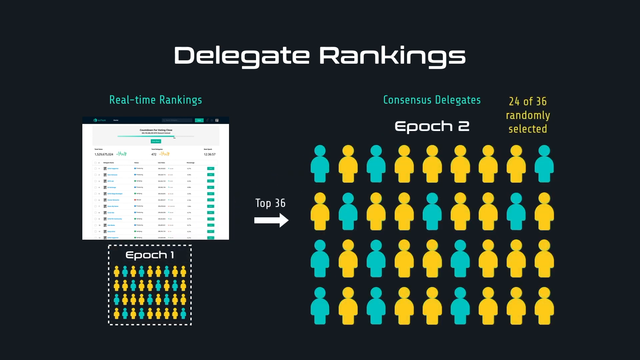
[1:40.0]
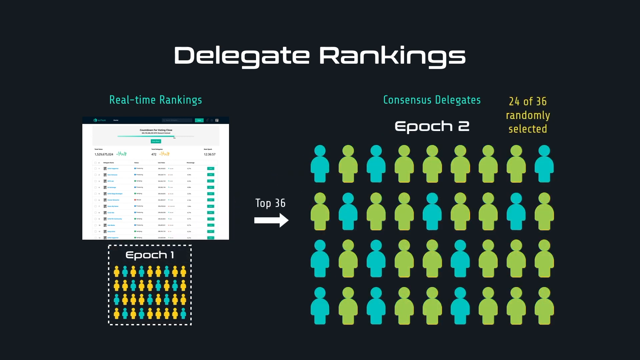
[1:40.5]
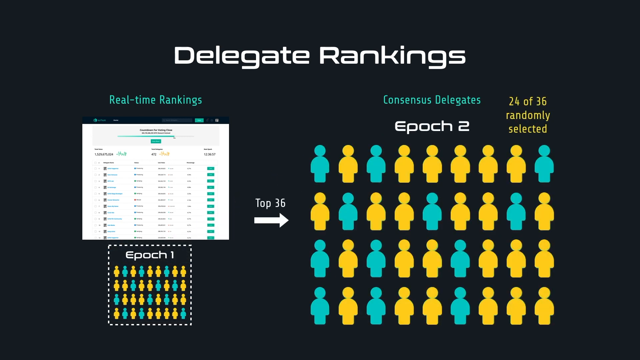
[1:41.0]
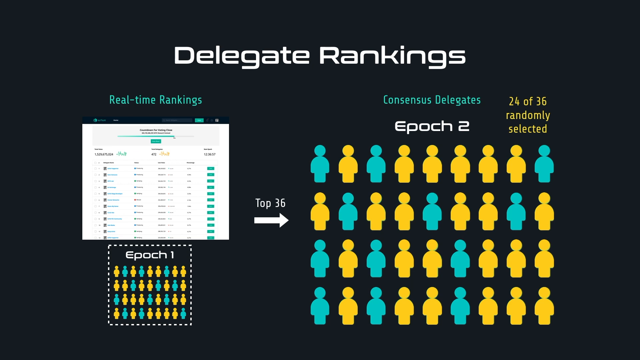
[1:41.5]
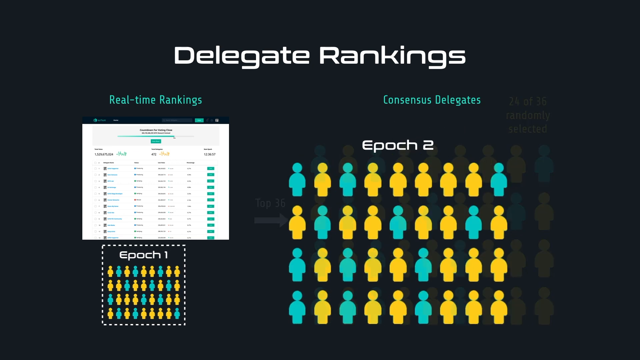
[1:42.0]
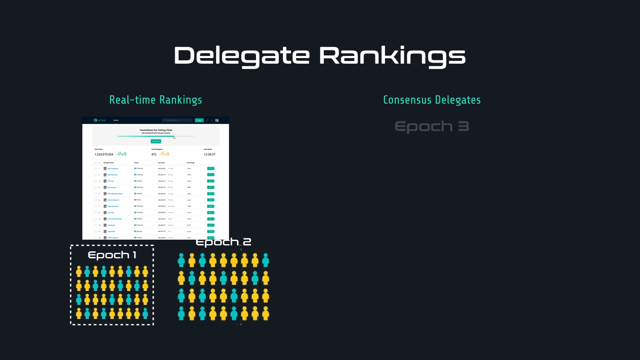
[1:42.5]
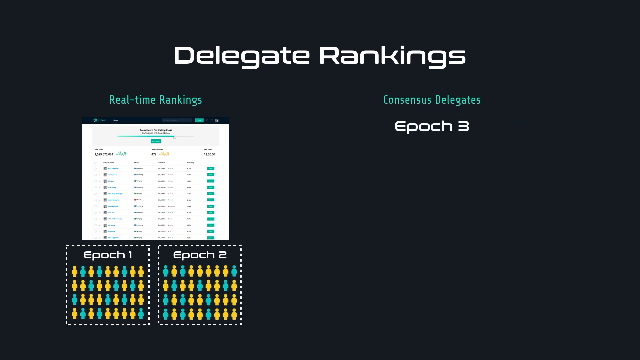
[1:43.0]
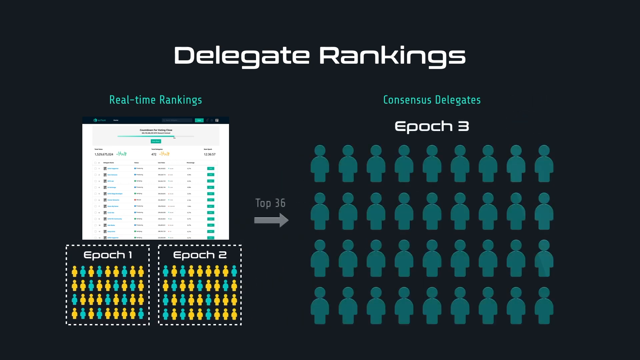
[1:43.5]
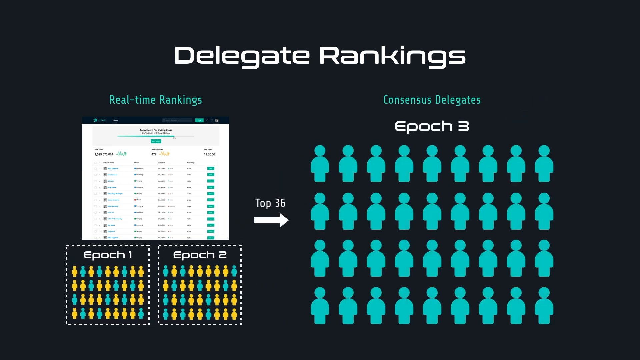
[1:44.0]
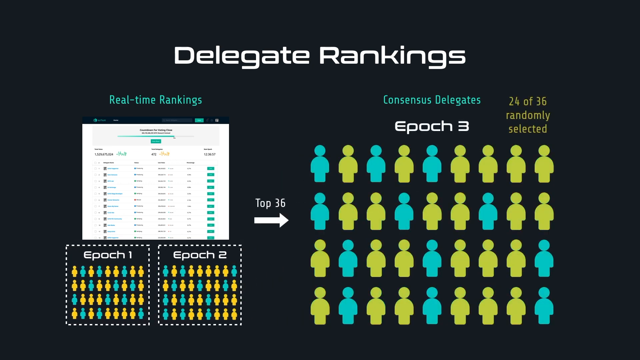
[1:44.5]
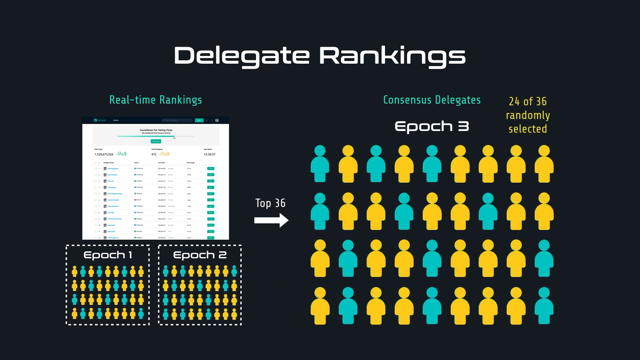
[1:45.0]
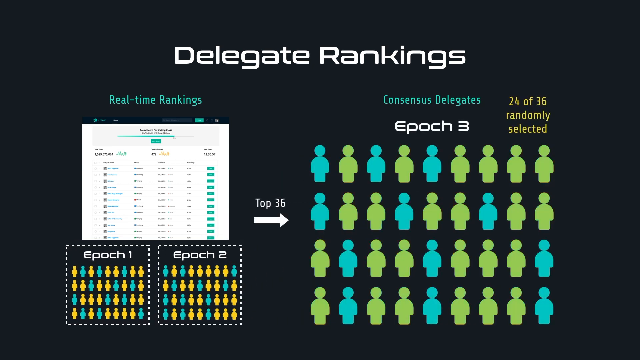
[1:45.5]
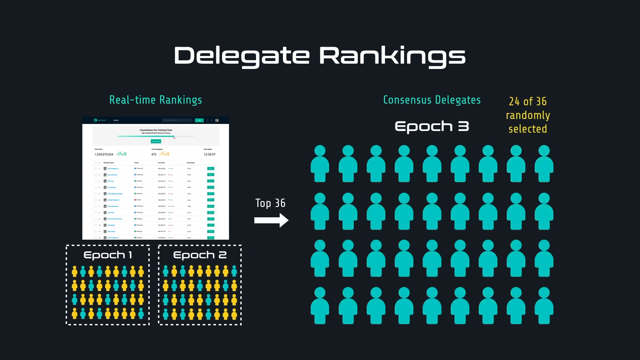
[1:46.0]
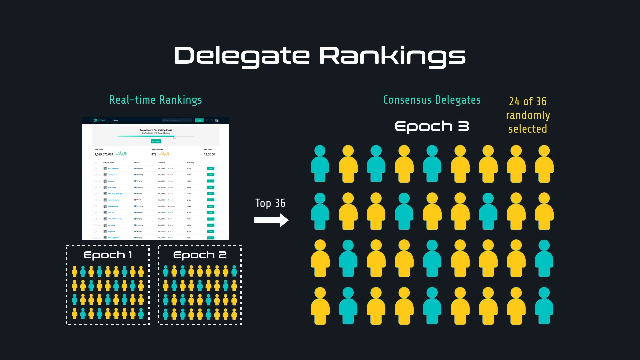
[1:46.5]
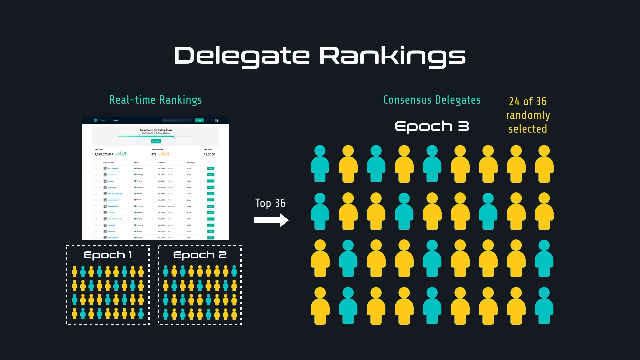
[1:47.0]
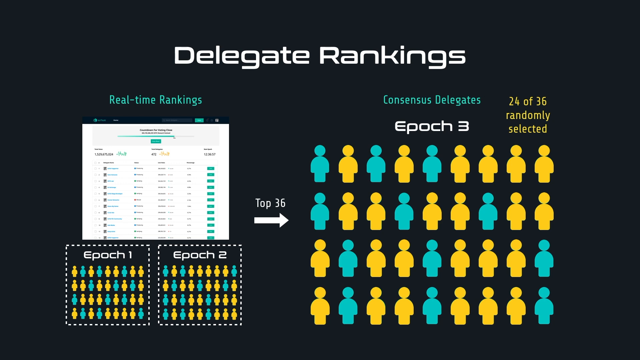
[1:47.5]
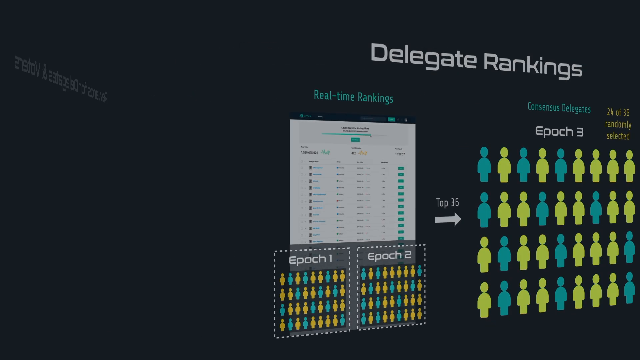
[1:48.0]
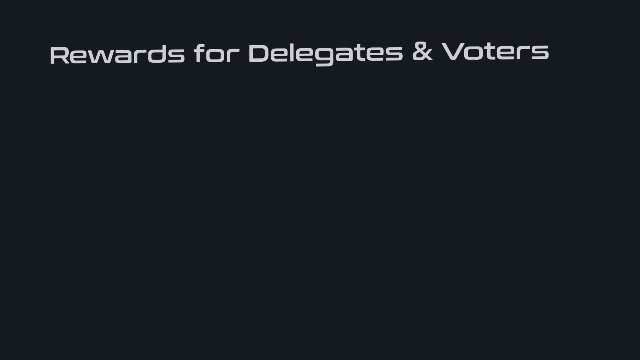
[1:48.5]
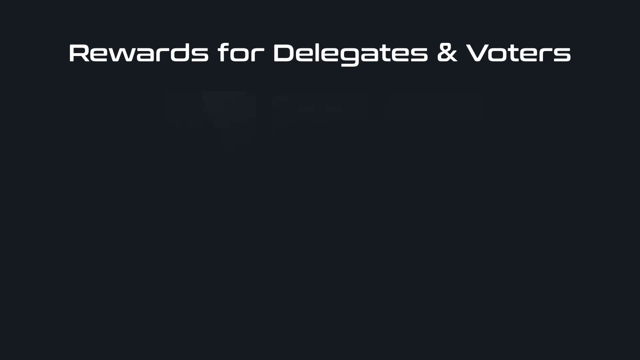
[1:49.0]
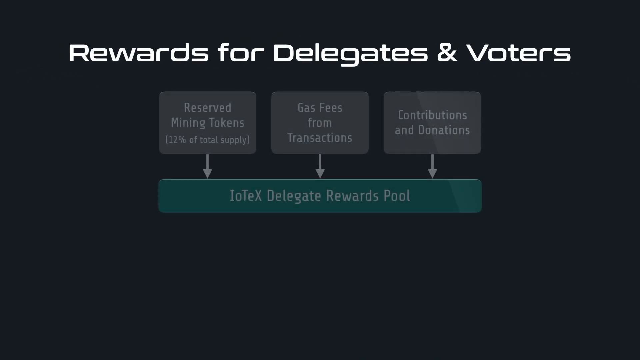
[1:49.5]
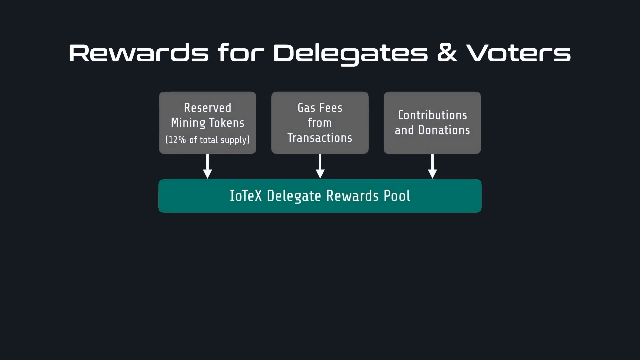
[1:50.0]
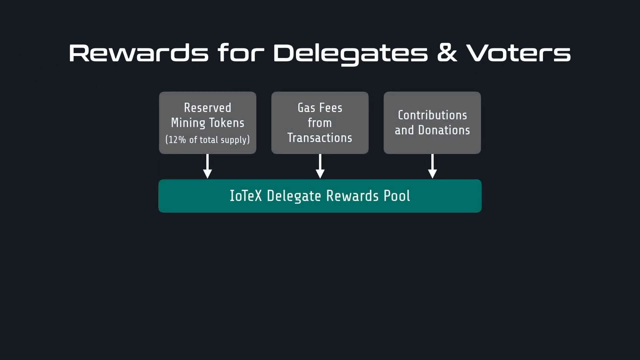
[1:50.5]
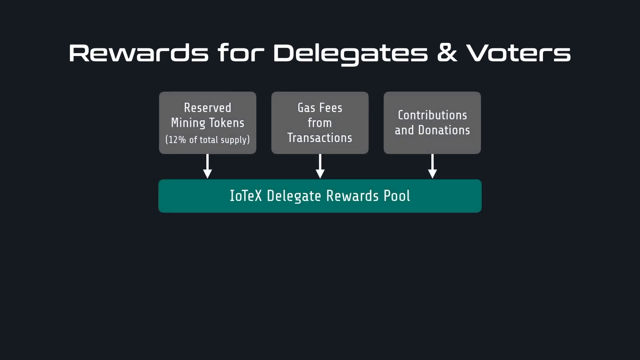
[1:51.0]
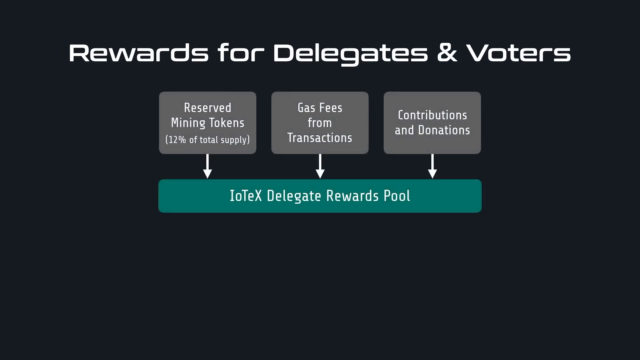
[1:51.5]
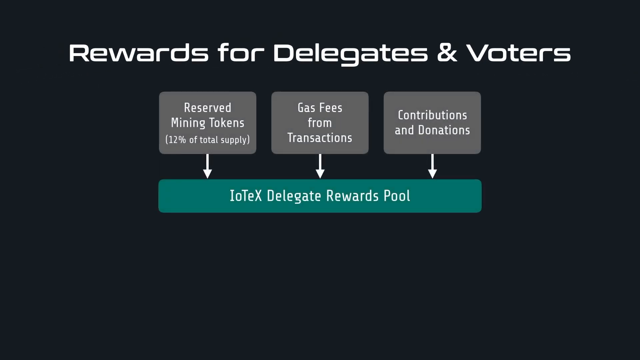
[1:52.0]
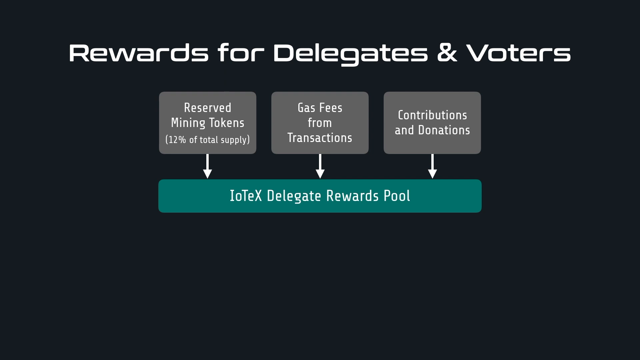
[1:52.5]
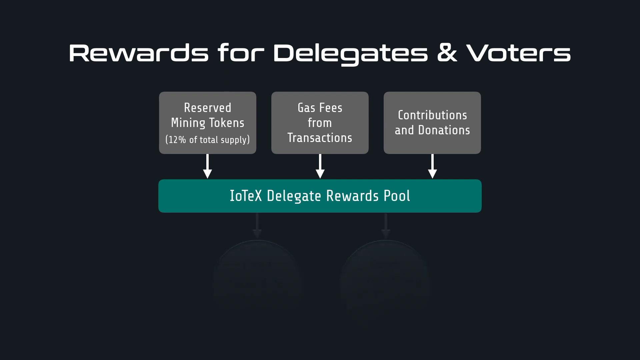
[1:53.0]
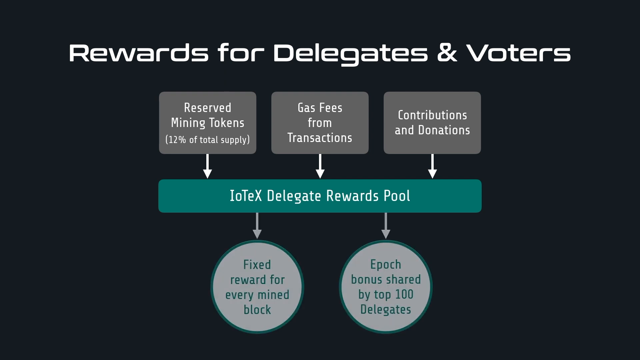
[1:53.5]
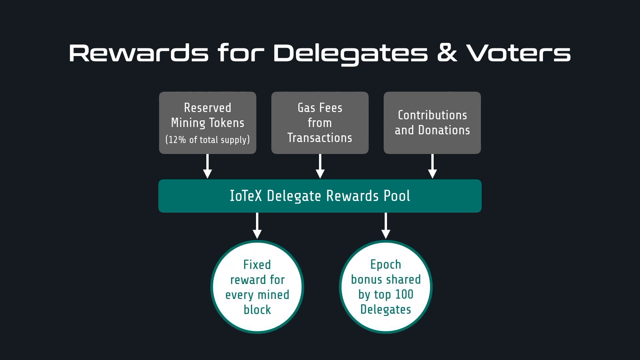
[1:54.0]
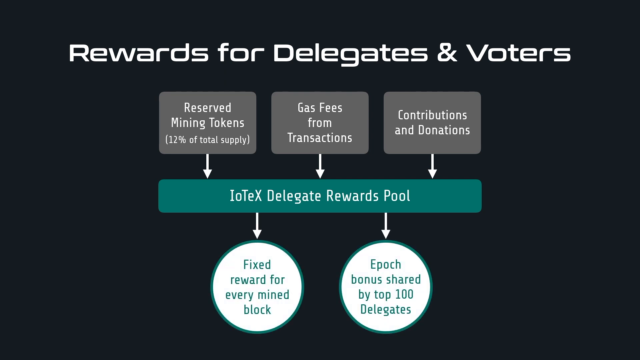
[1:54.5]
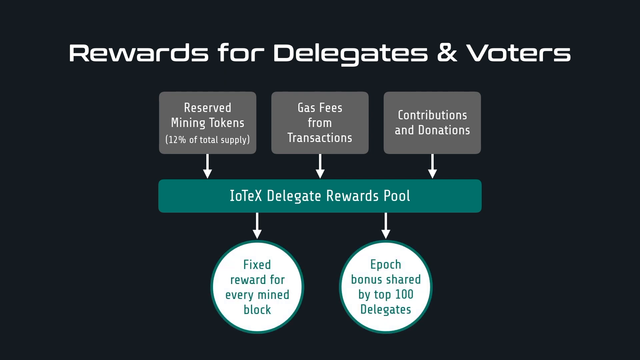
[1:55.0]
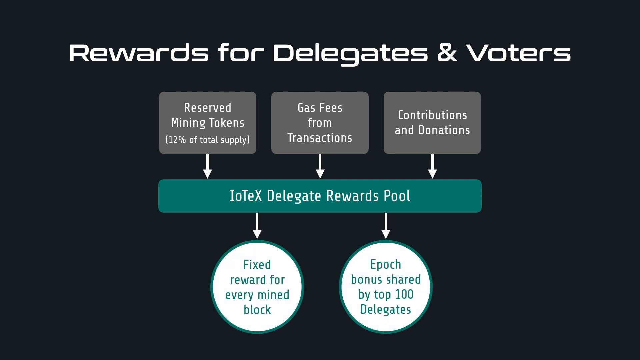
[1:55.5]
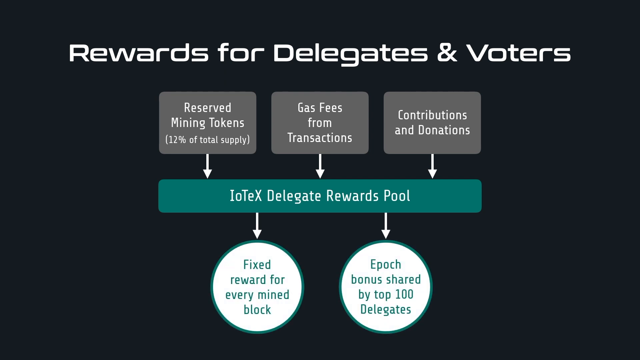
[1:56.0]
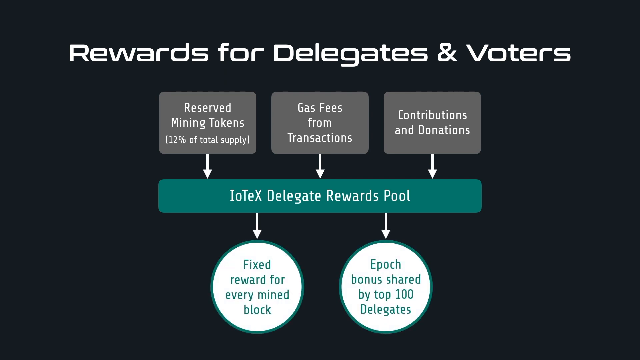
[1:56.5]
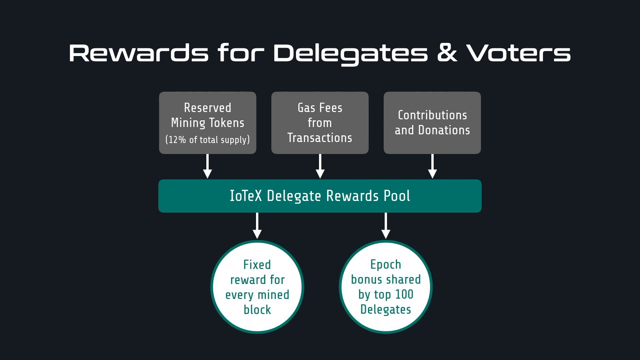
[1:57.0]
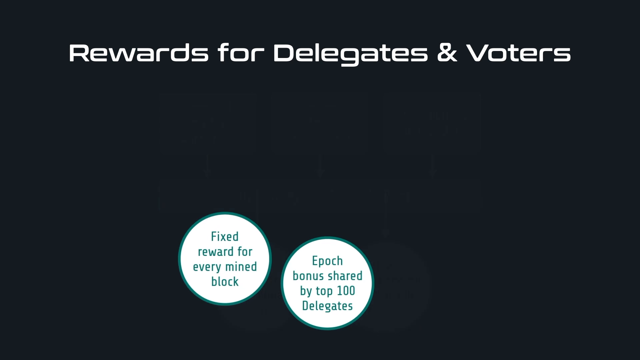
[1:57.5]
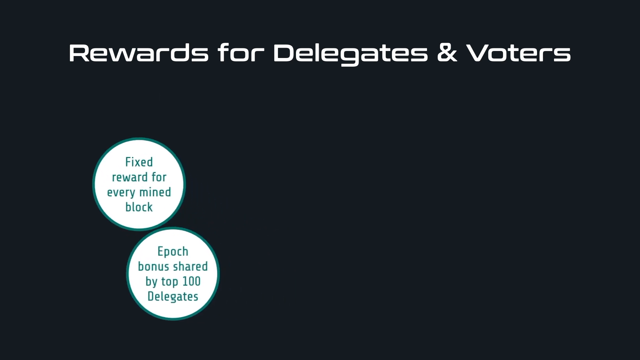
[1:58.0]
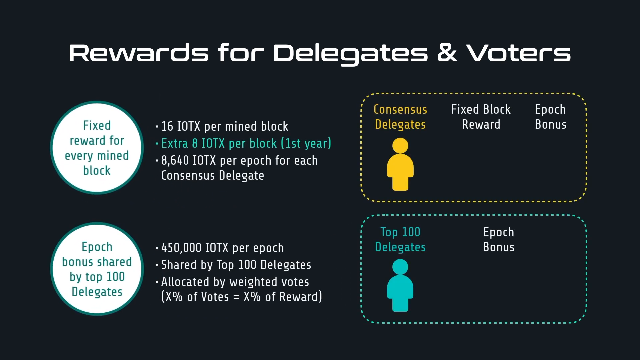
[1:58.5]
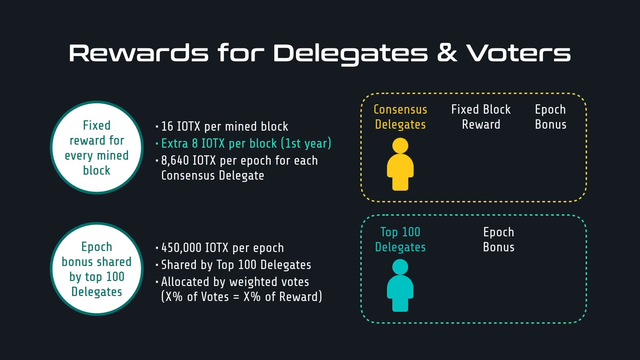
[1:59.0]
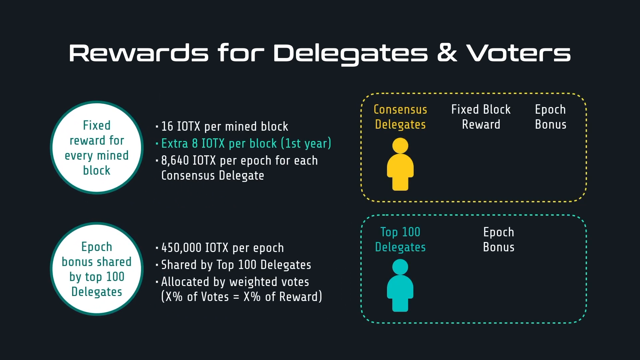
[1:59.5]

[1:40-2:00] A slide has a white heading at the top reading "Delegate Rankings". On the left side is a white document with what look like black and turquoise text and boxes on it. Underneath is a heading reading "Epoch One" with what look like yellow and turquoise green stick figures of men, then an arrow pointing to the right, and then more stick figure men in the same colors, which seem larger and then shrink. Another title reading "Epoch Two" appears on top; it shrinks and goes right next to the box reading "Epoch One". Then "Epoch Three" appears on the right side, this time with stick figures in turquoise green and regular green; they turn yellow, flash different colors, and go back to yellow before the slide disappears. Another slide comes in reading "rewards for delegates and voters" in white text. Three boxes appear with three arrows pointing down, then white text with what looks like a turquoise bar behind it, and then two more arrows pointing down to two circles with turquoise green text on them.